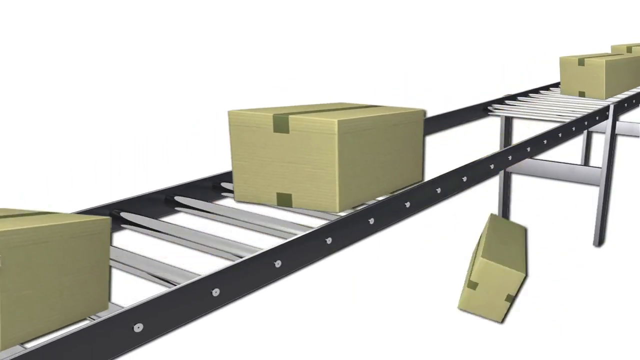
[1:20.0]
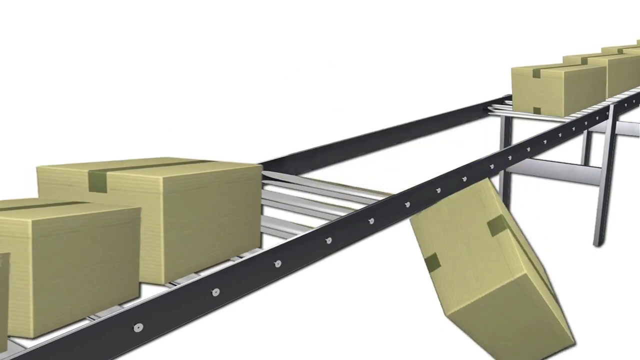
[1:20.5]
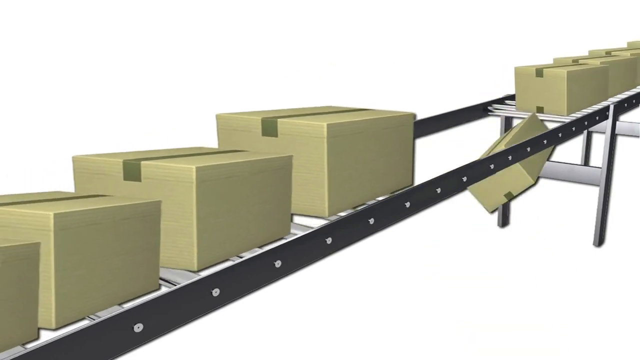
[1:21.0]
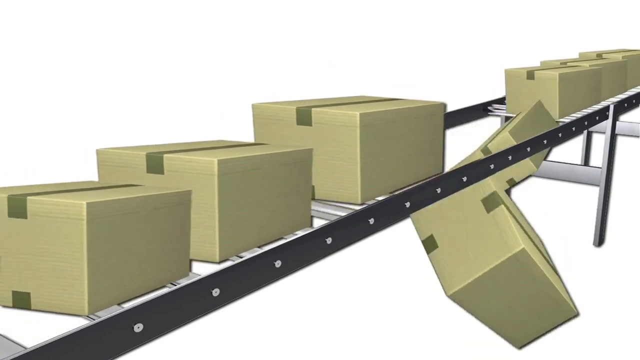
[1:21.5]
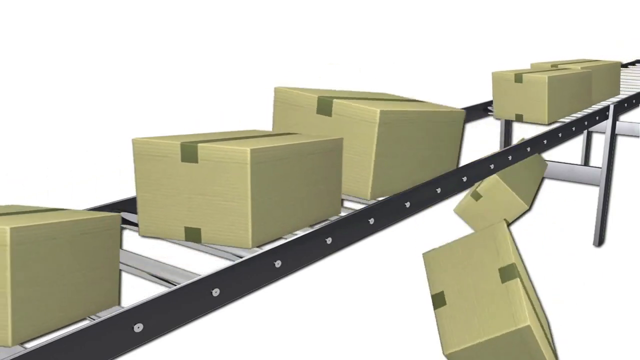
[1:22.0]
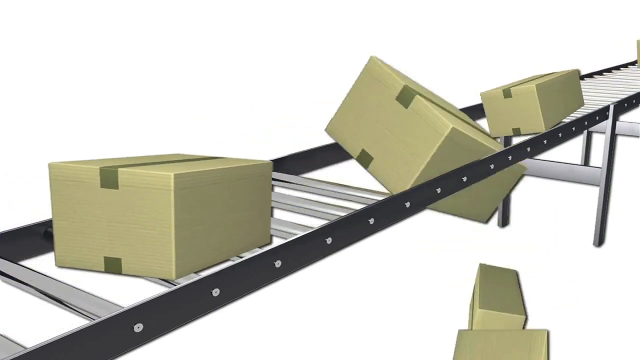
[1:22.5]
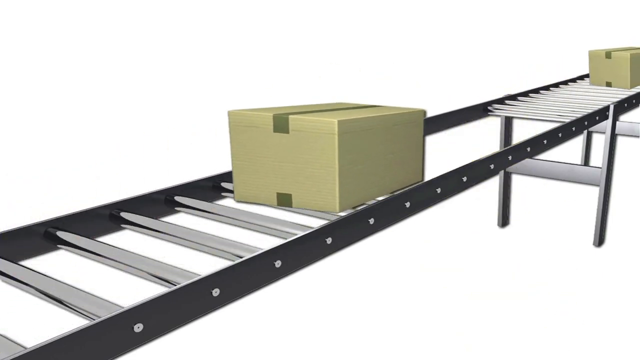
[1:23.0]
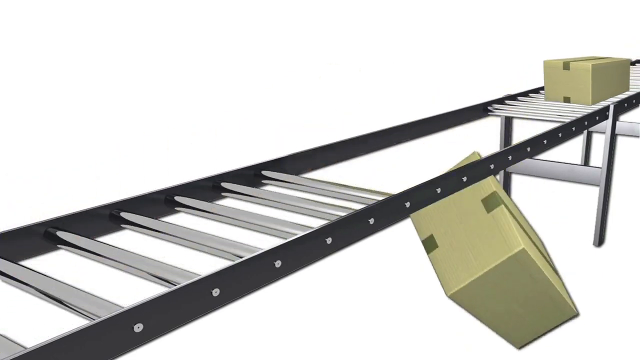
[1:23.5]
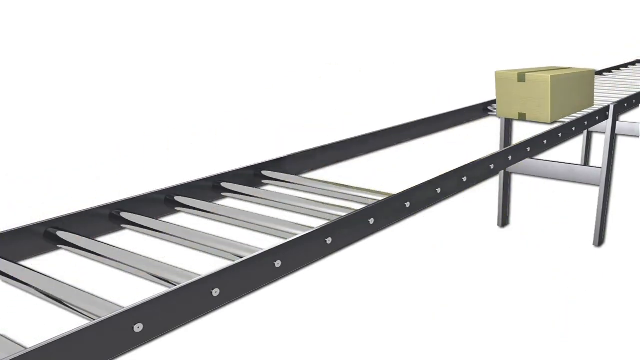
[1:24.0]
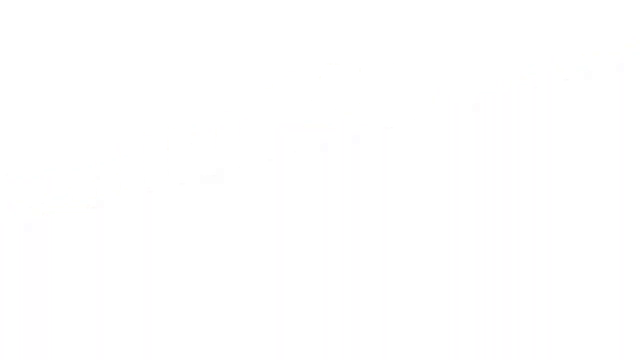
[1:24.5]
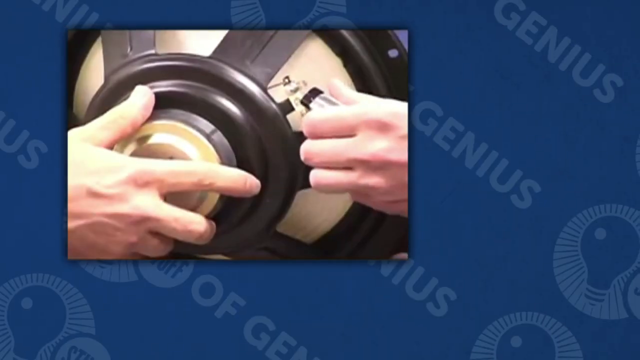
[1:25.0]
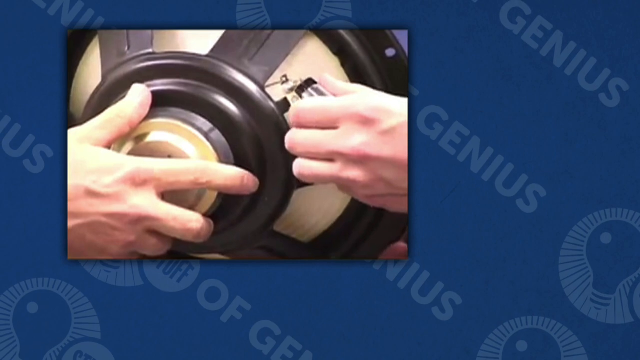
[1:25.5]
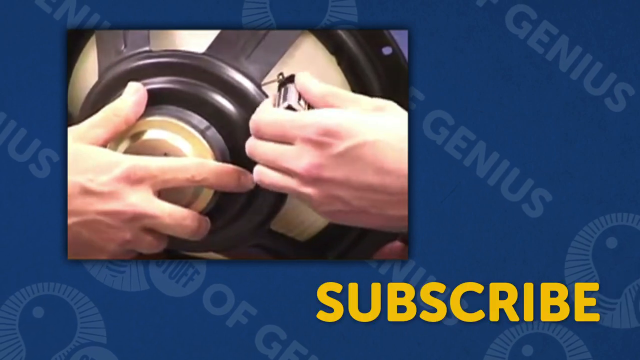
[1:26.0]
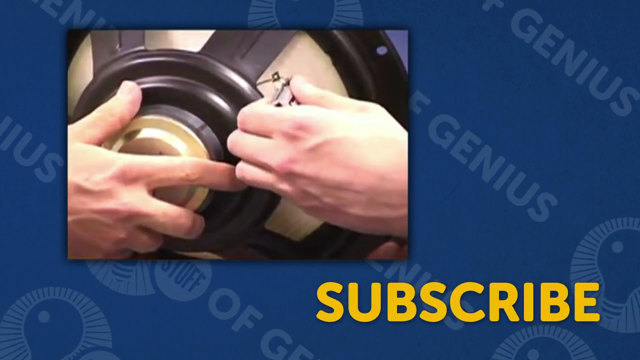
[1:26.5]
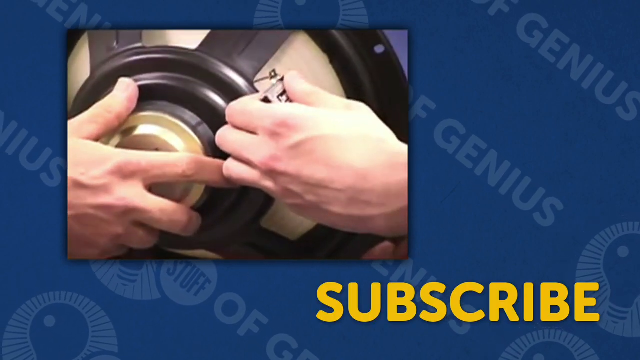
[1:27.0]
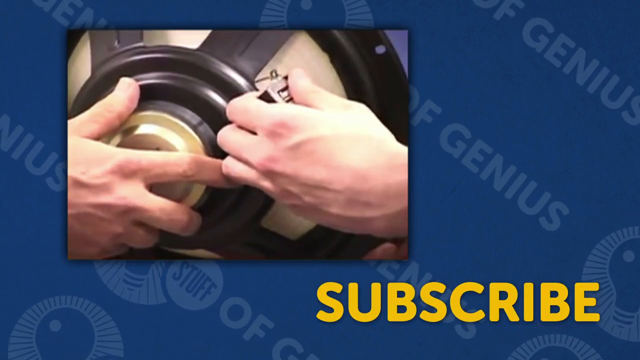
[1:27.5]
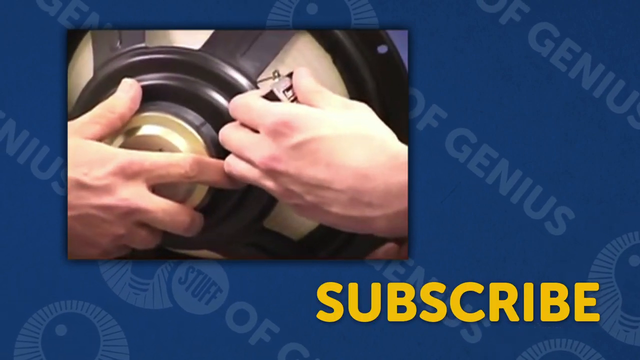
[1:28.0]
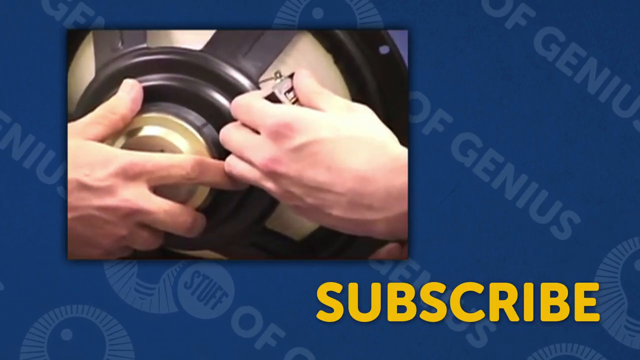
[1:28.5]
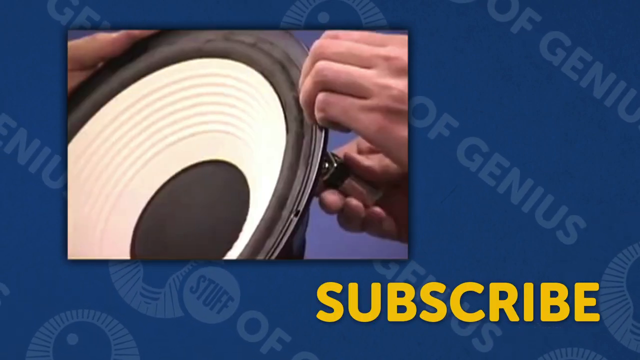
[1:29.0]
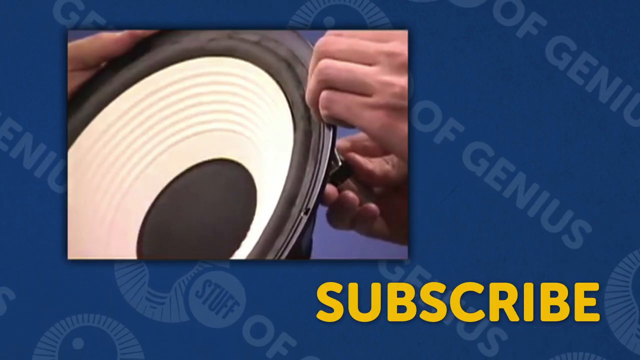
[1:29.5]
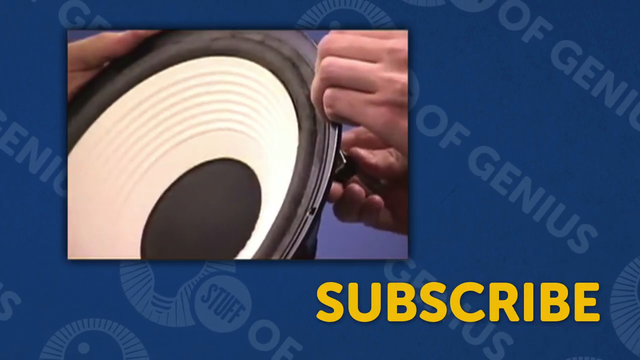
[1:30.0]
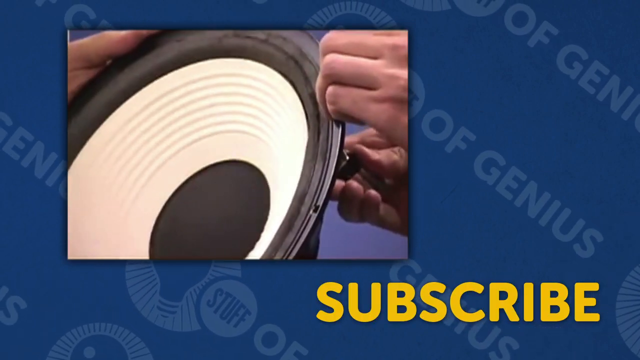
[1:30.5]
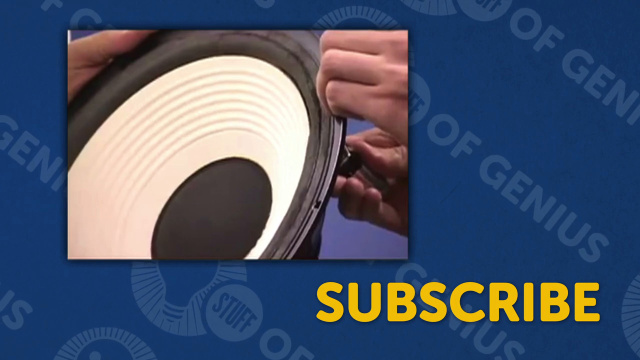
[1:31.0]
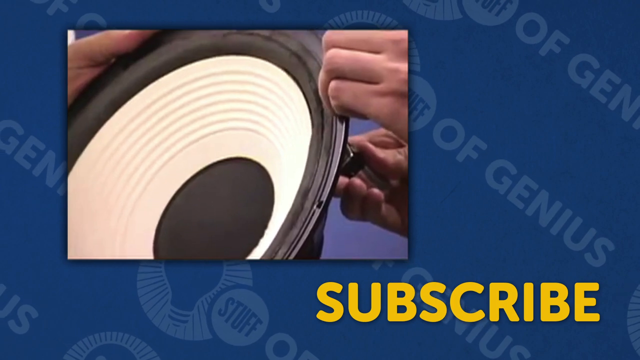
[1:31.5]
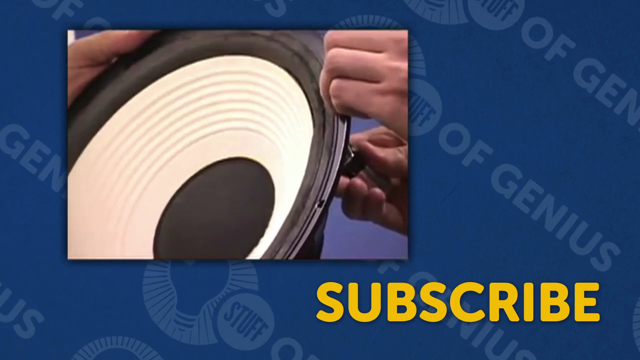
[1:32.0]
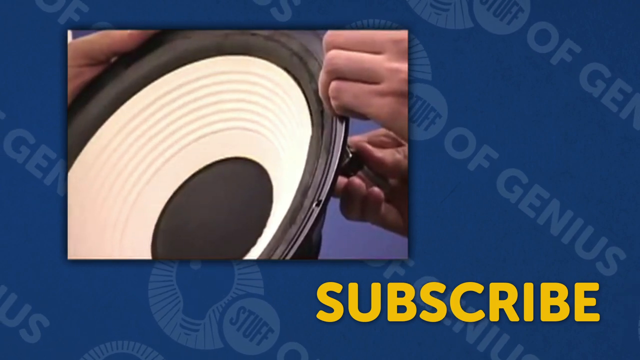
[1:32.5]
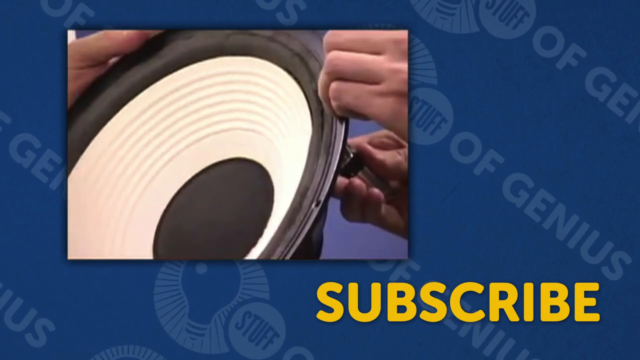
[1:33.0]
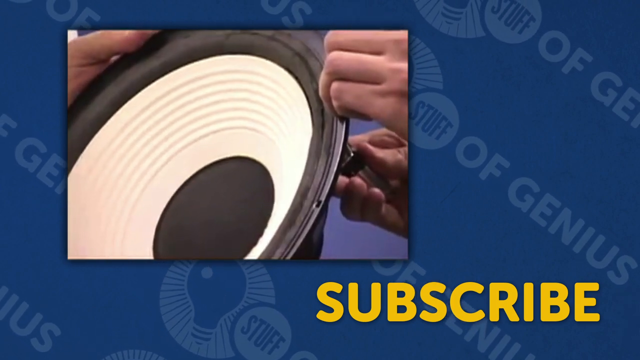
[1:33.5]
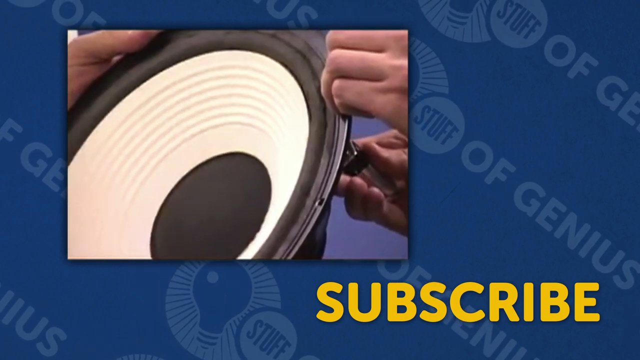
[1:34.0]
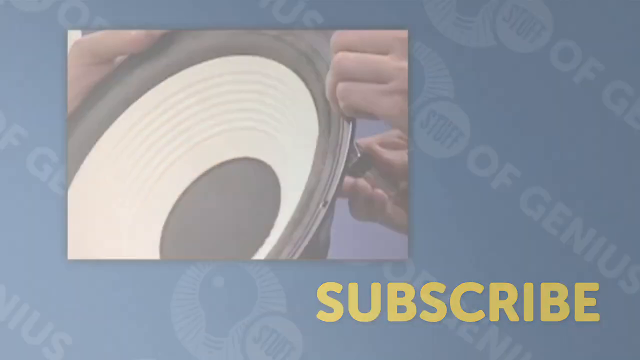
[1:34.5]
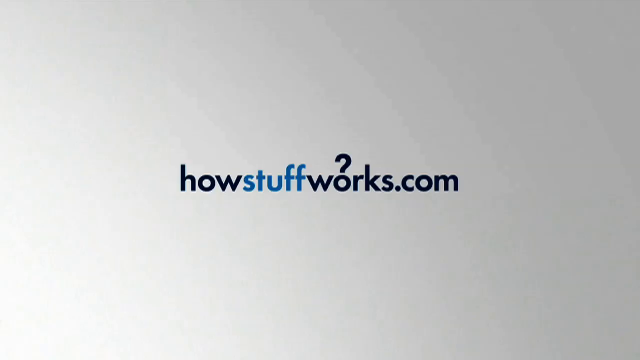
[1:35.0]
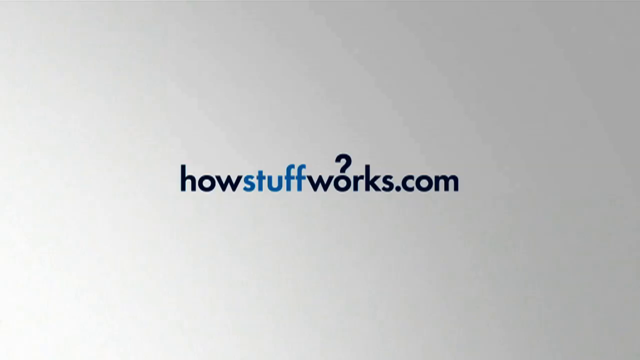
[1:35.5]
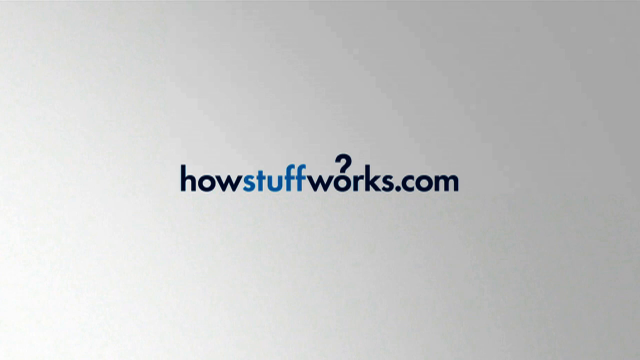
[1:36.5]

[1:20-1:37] A conveyor belt is in the middle of the screen on a completely white background. Packages come from the left and right sides of the screen, and there is a space in the middle of the conveyor belt that the packages fall towards; packages keep piling onto the conveyor belt while many fall through the middle hole. The scene fades out to a person using their hands to attach a battery to a speaker to test it out. The person has white Caucasian hands and holds the speaker on their lap. The speaker shows thumping. The scene then closes on "HowStuffWorks.com" on a gray gradient background, with the word "Stuff" highlighted in blue and a question mark above the O of the word "Works".